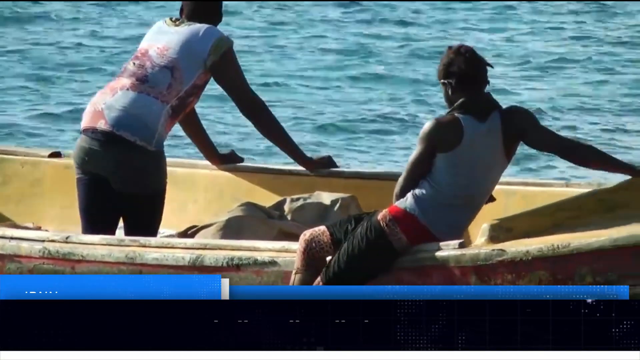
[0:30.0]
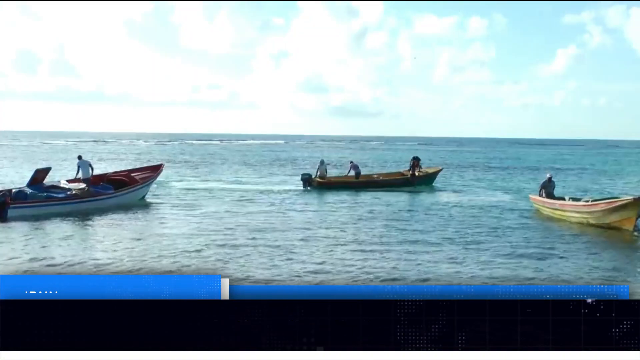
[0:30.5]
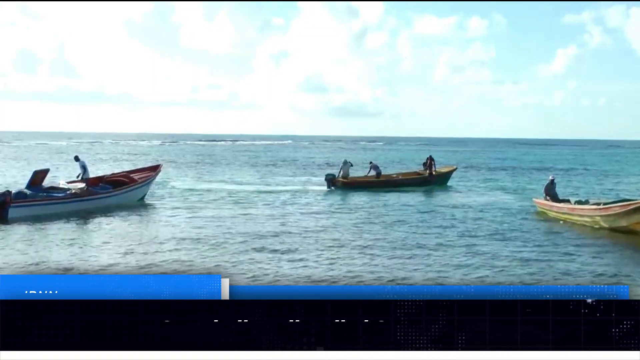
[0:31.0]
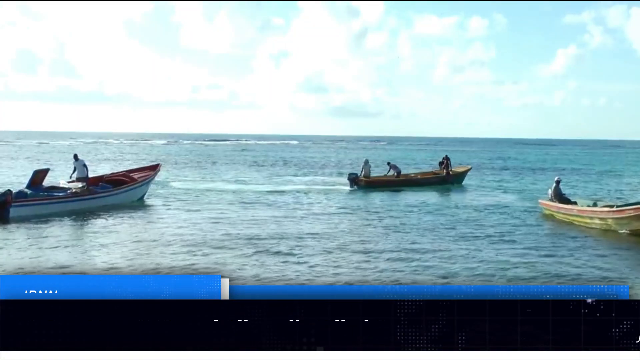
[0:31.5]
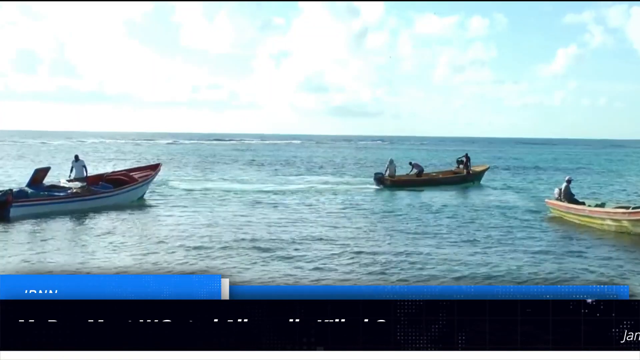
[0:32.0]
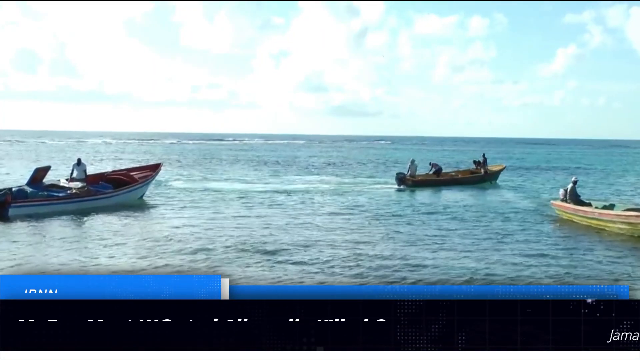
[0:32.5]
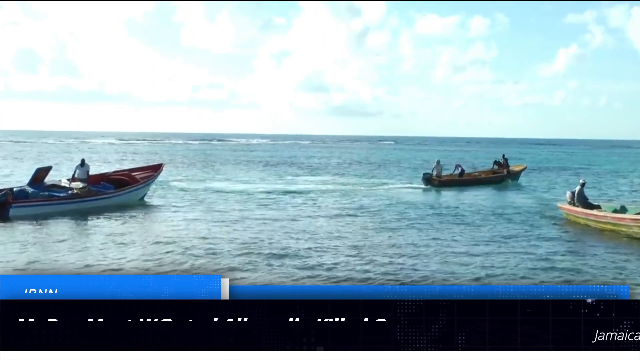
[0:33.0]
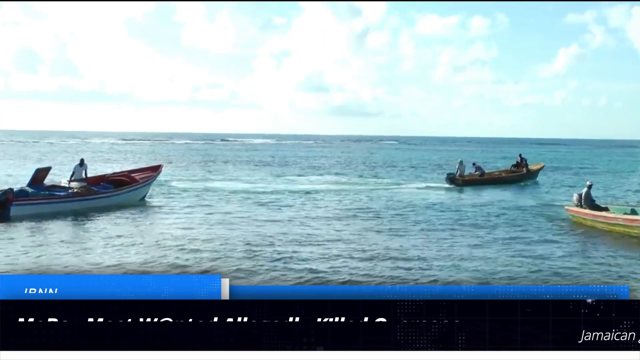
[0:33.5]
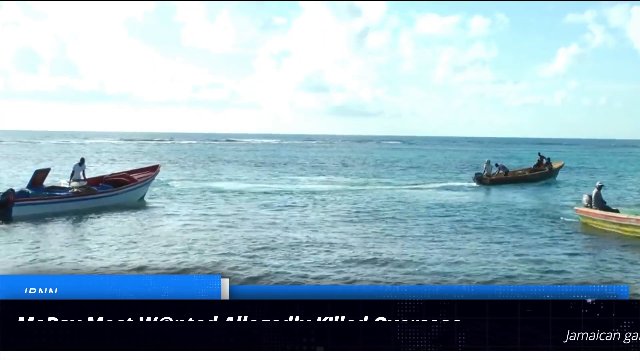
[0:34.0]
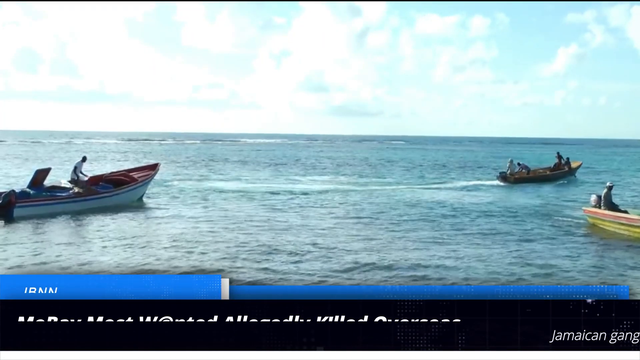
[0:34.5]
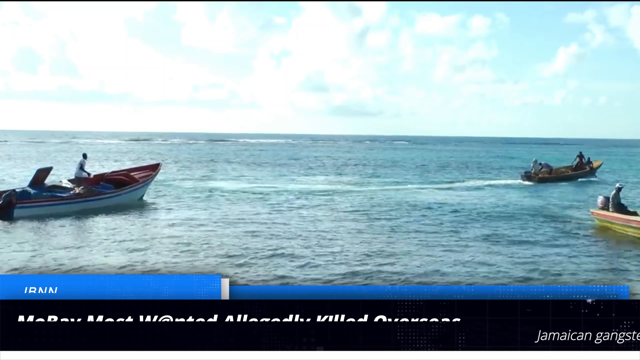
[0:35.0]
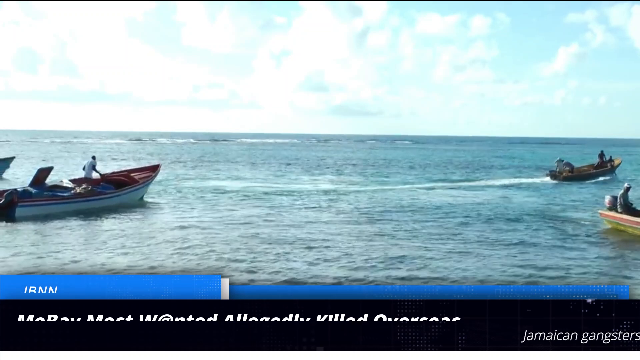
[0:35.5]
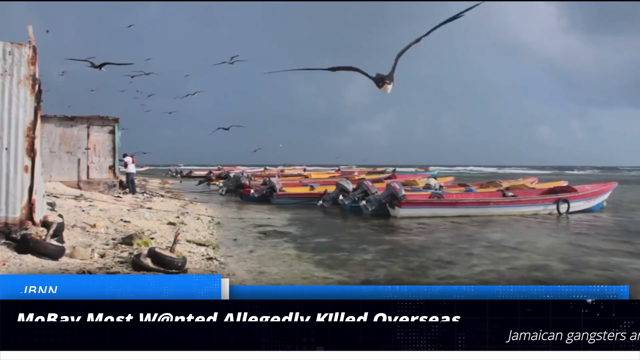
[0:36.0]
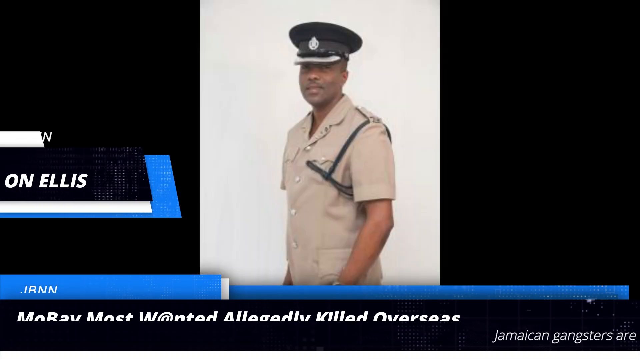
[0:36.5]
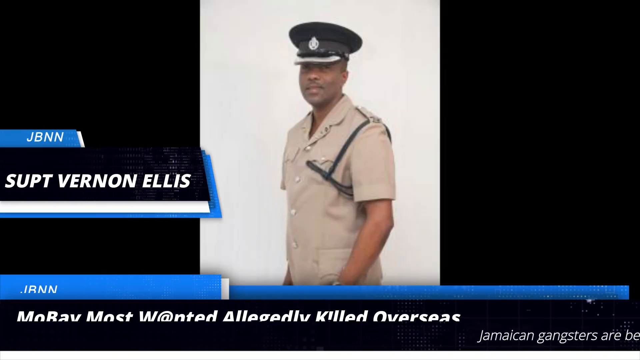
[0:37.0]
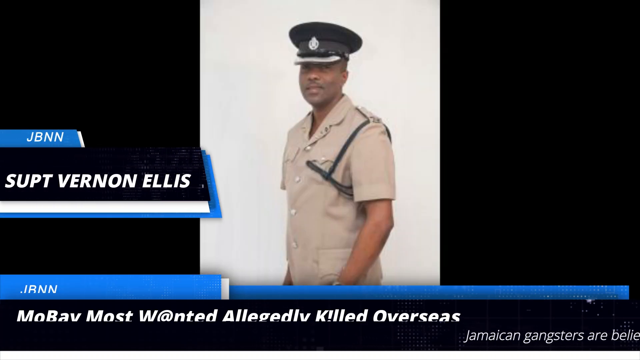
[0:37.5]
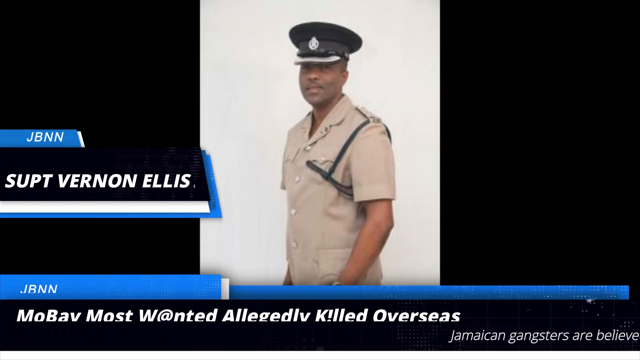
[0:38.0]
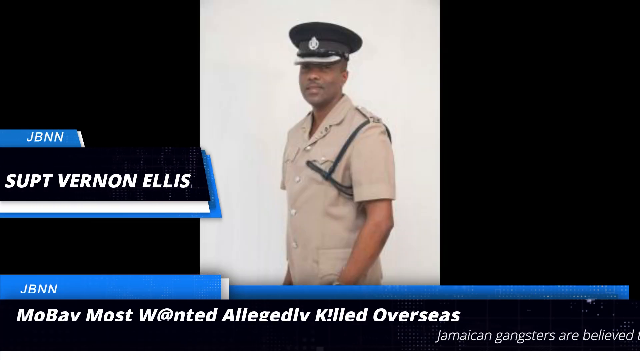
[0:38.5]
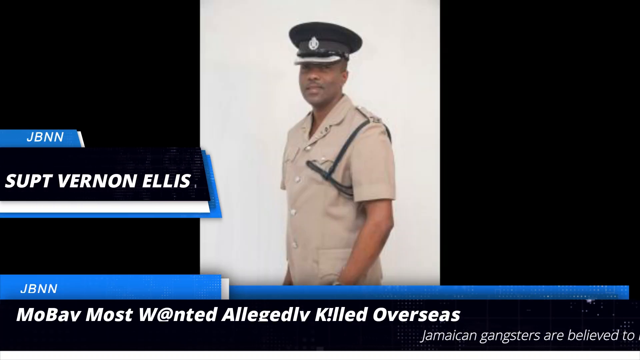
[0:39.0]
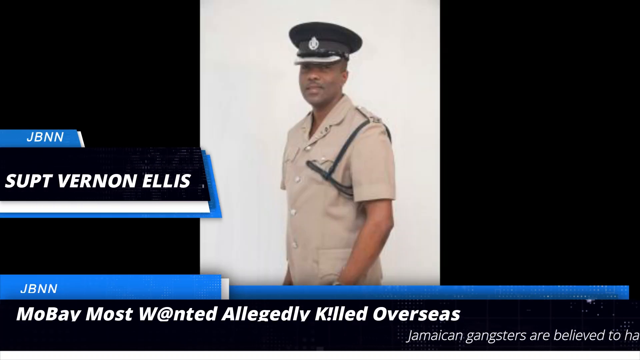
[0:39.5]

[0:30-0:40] A body of water fills the bottom of the frame, running left to right across about two-thirds of the view, with no land visible anywhere, so it is a very large body of water. The day is overcast with a lot of clouds, but it is very bright. There are three boats: one on the left about 40% up from the bottom, one just right of center, and one on the right, also about 40% up from the bottom. The first boat has one person, the second has three, and the third has one. The second boat is moving in a north-eastern direction while the other two are fairly stable. Then comes a static image with letterboxing on the left and right, each about a third of the screen. The center image has a plain white background and shows a dark-skinned individual in a black military hat that is flat on top and a tan shirt with gold buttons down the middle. His body faces somewhere around seven o'clock, but his head is turned to look right at the camera.